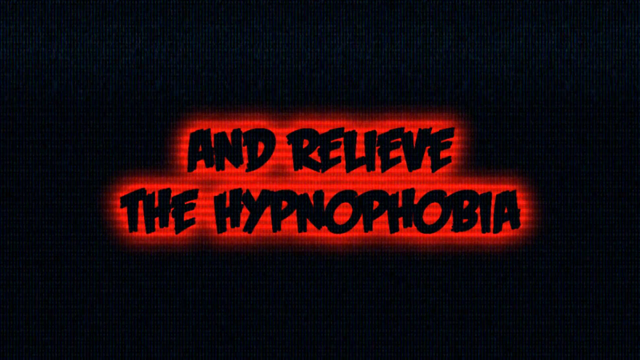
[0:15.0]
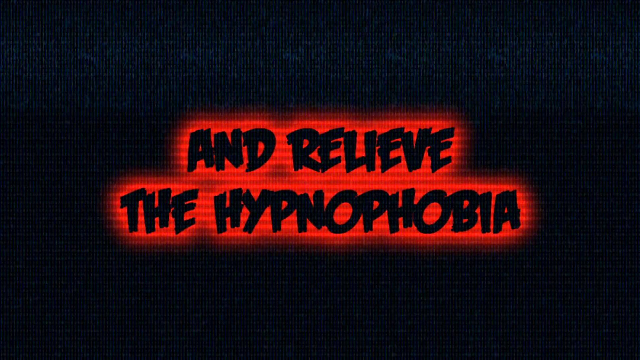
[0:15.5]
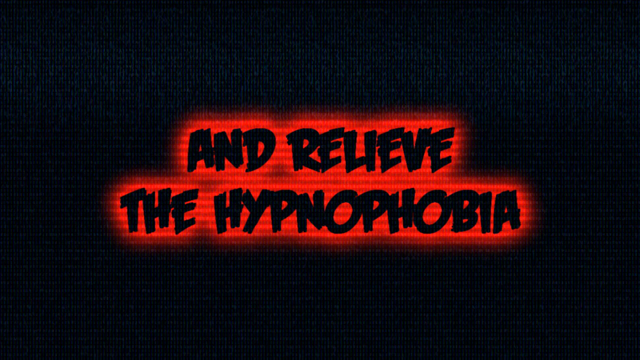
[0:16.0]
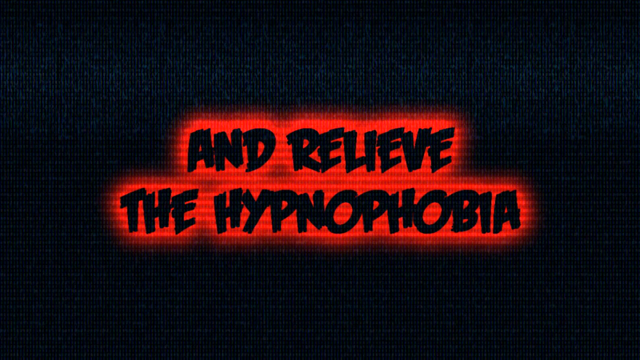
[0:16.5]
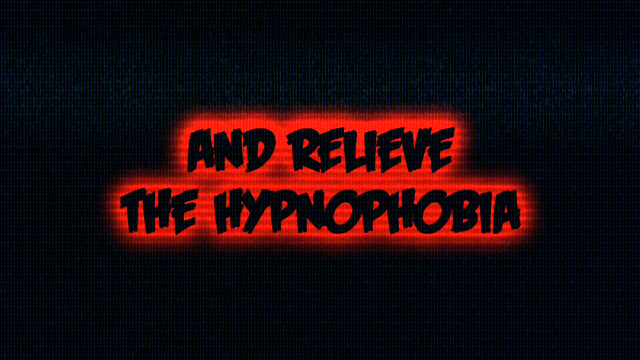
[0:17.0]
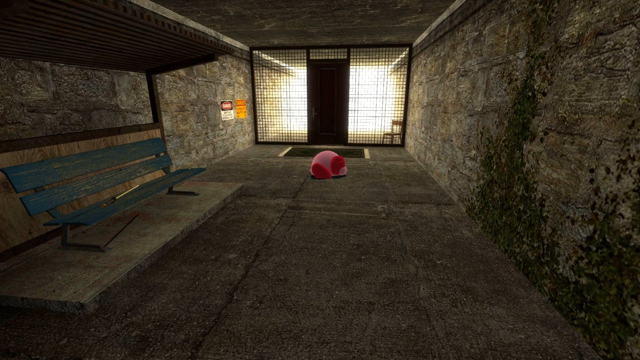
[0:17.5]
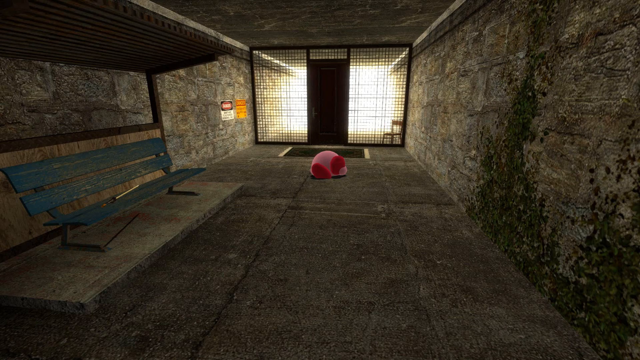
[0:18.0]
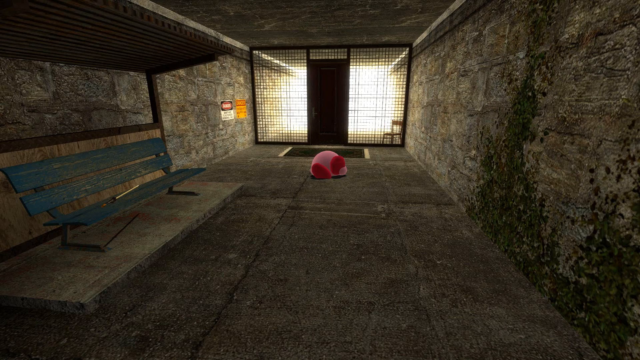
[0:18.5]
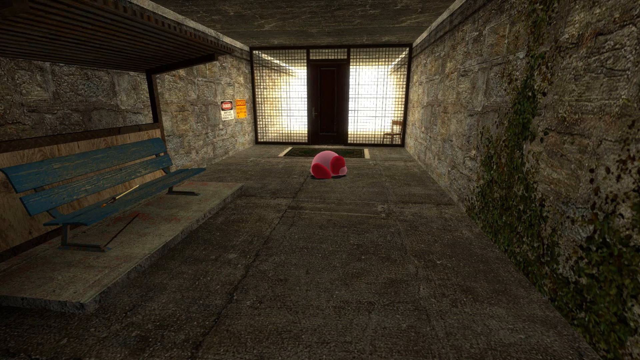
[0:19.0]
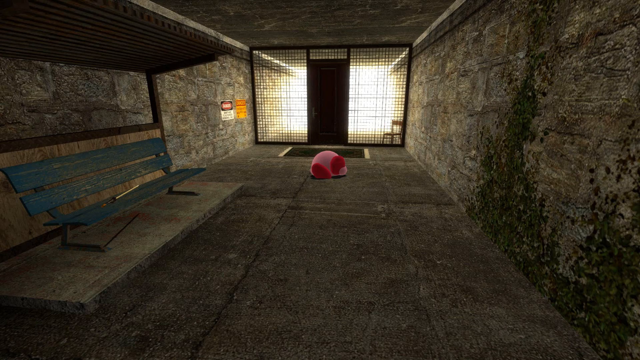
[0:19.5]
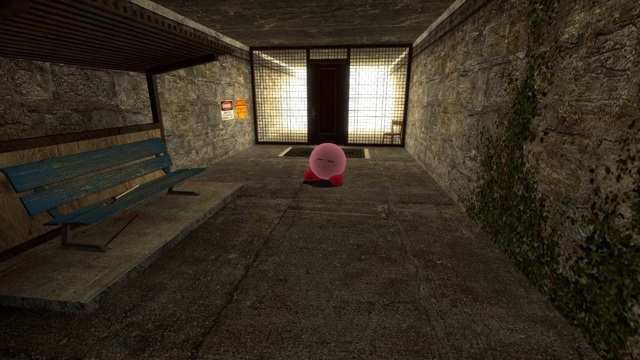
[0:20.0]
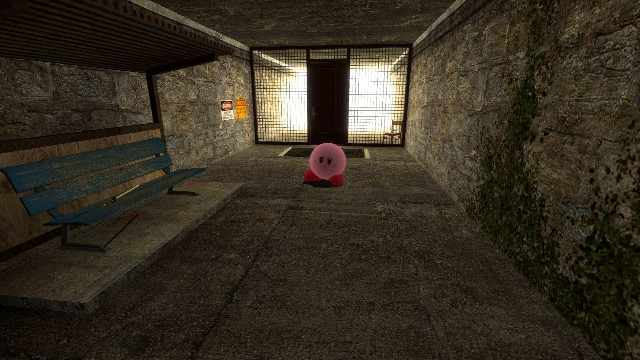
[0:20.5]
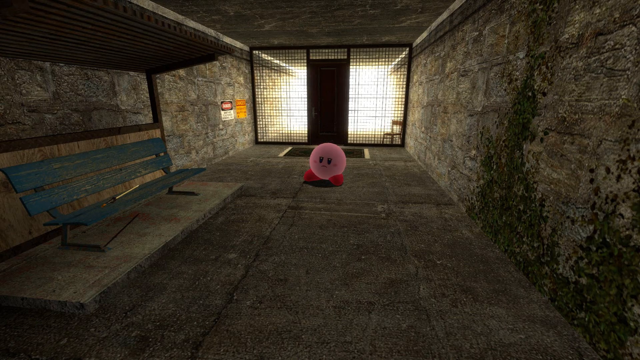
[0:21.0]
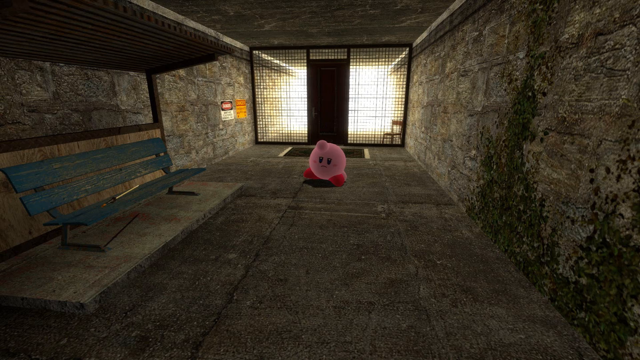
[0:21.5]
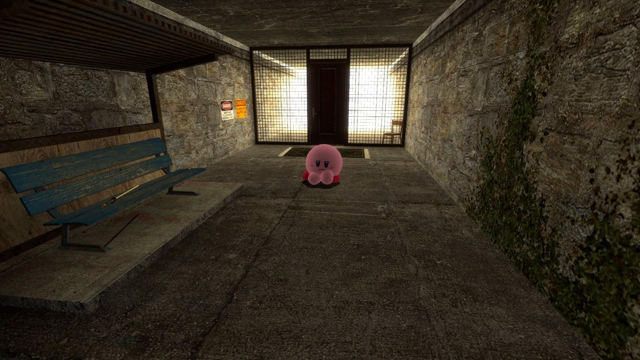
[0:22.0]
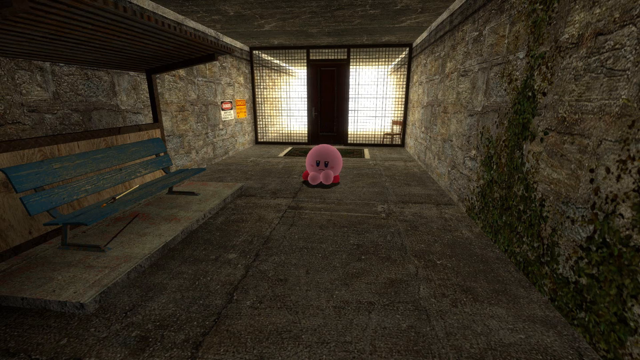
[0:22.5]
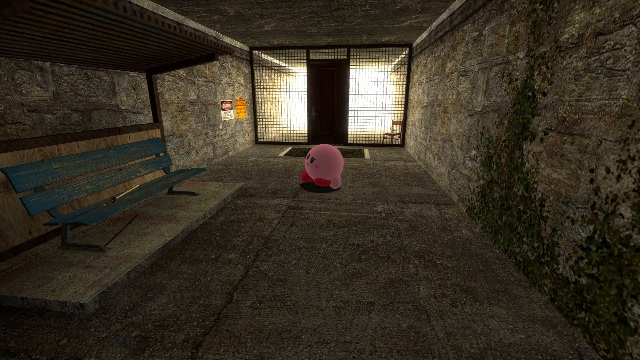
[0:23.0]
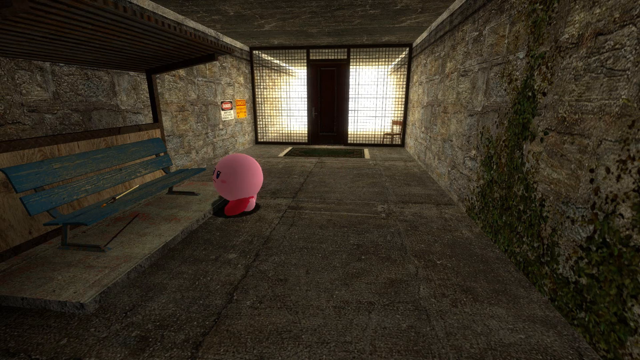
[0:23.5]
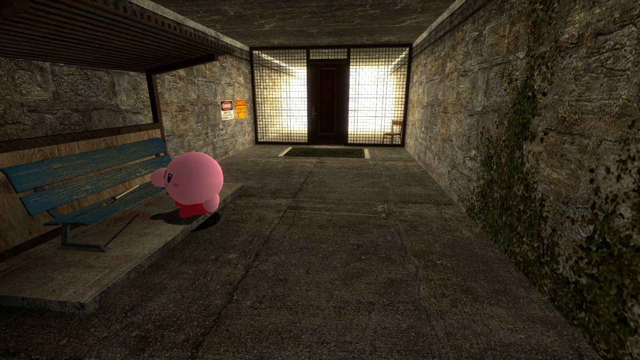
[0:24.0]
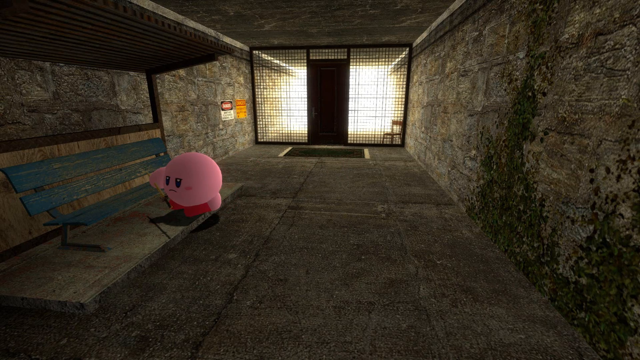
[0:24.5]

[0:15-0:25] The title reads "relieving the hypnophobia". The scene is a dark, stone-looking room, and the text "and relief, the hypnophobia" appears. In the room is a pink character with a circle body, circle feet, circle arms and a little purple dot on its head. It has black eyes, a mouth and rosy cheeks. There is a blue wood-looking bench, like one in a park, and the character jumps up to the bench. Outside light comes into the room. It is almost like a jail room, with a closed door and very wire-like bars. A couple of signs are on the wall. The words "and relief the hypnophobia" flash intermittently.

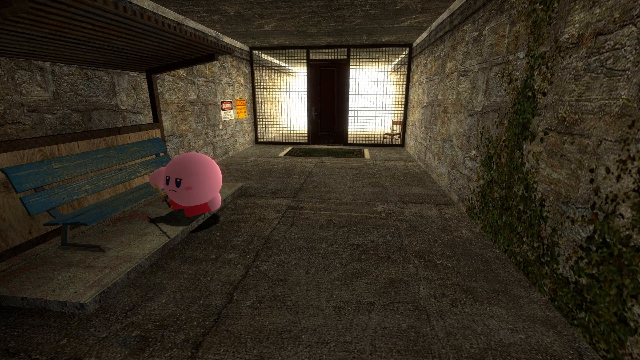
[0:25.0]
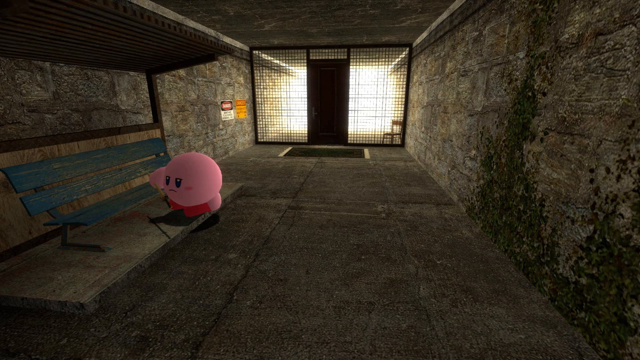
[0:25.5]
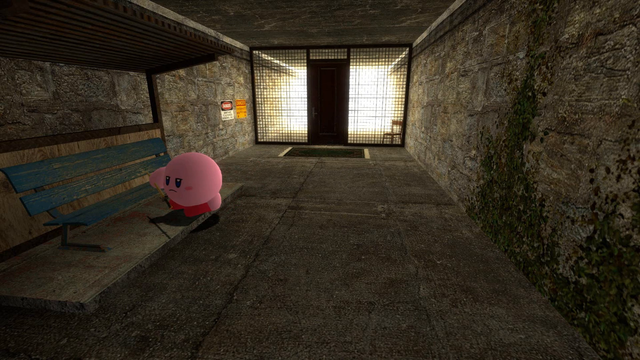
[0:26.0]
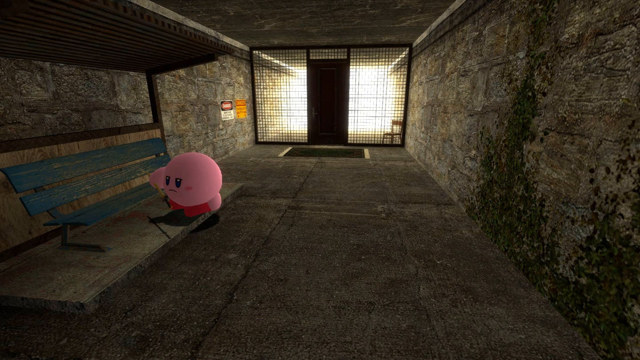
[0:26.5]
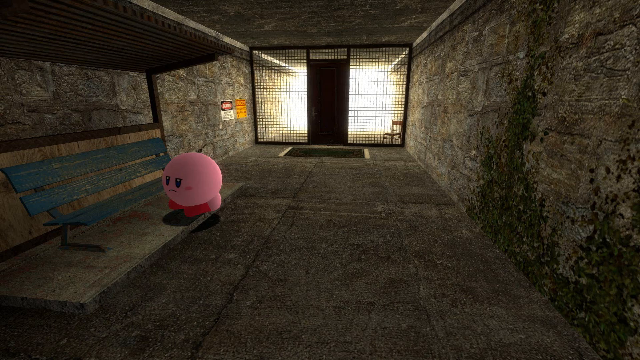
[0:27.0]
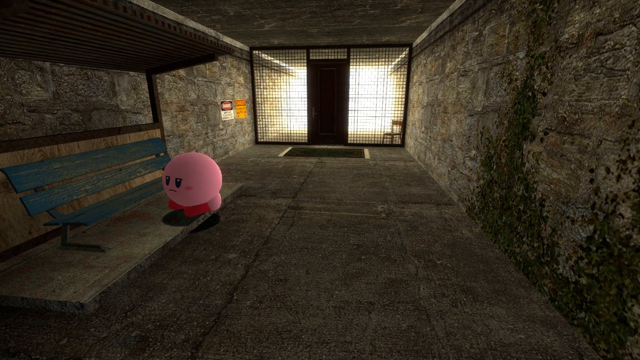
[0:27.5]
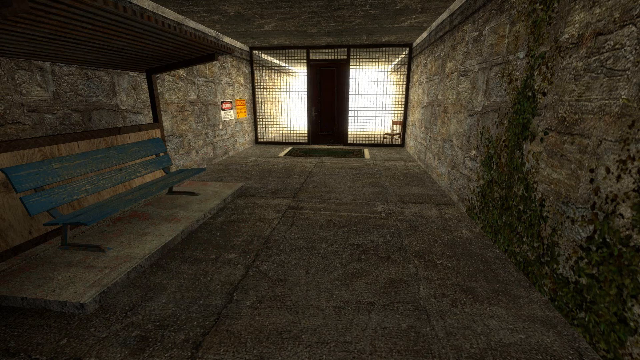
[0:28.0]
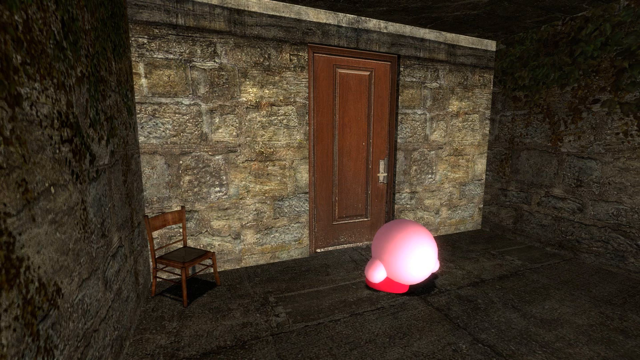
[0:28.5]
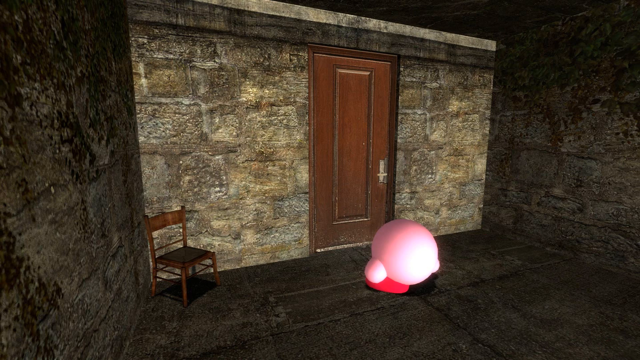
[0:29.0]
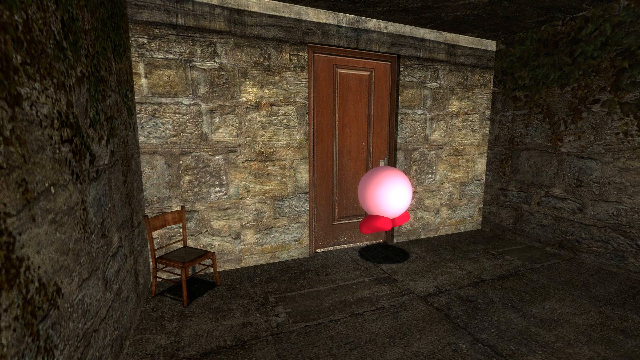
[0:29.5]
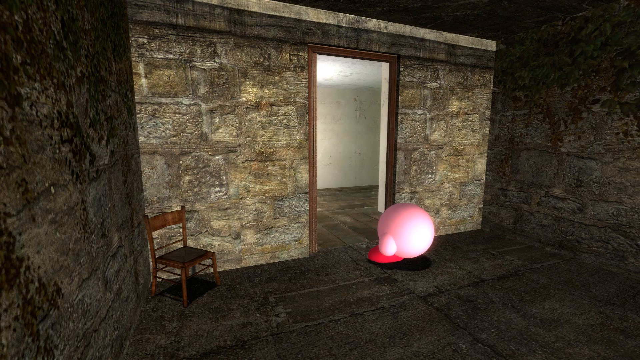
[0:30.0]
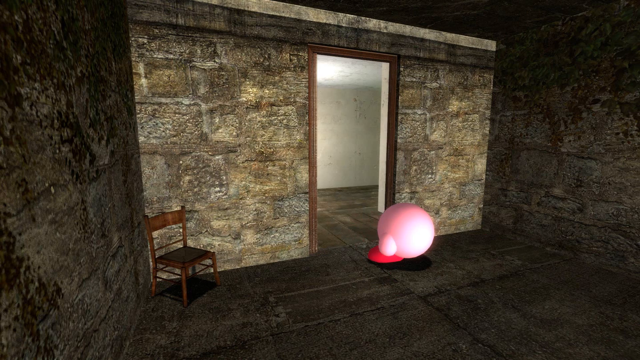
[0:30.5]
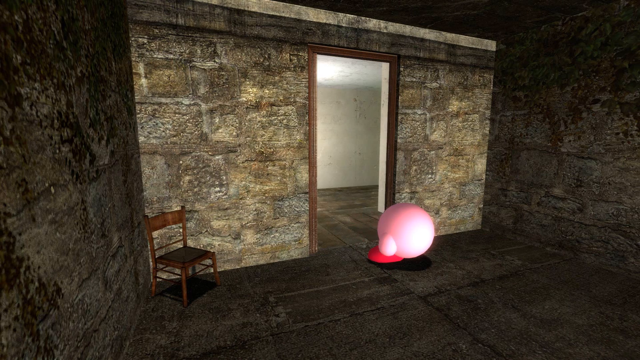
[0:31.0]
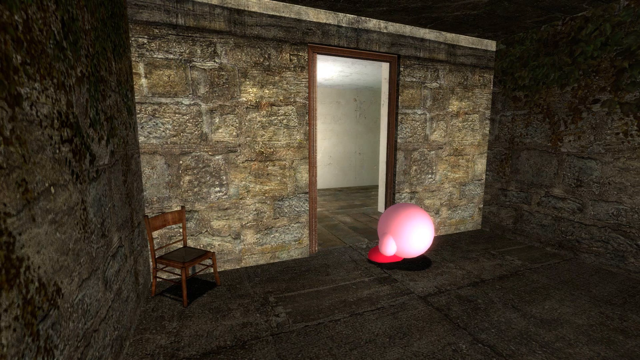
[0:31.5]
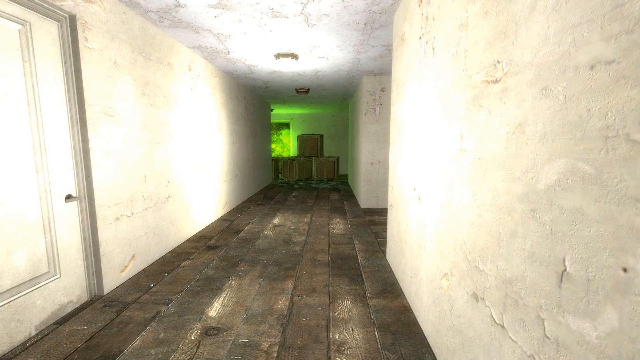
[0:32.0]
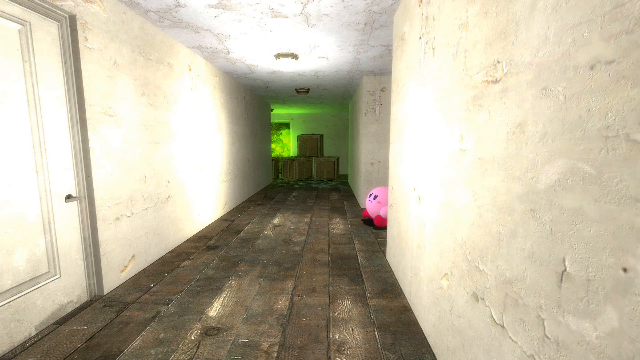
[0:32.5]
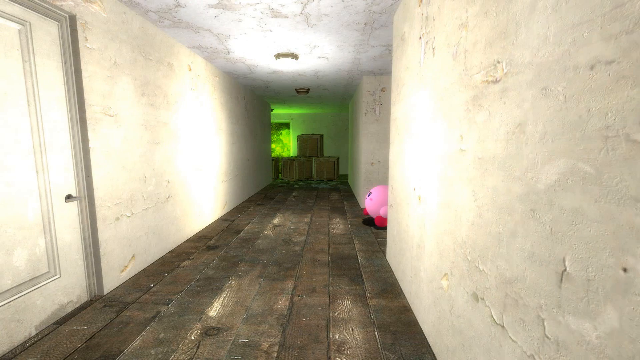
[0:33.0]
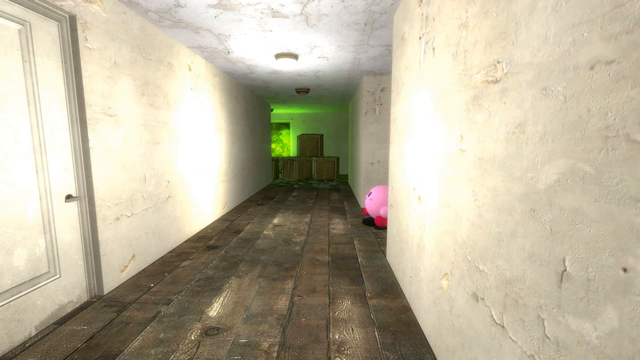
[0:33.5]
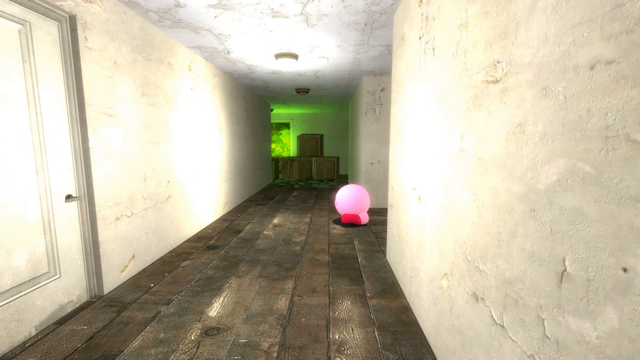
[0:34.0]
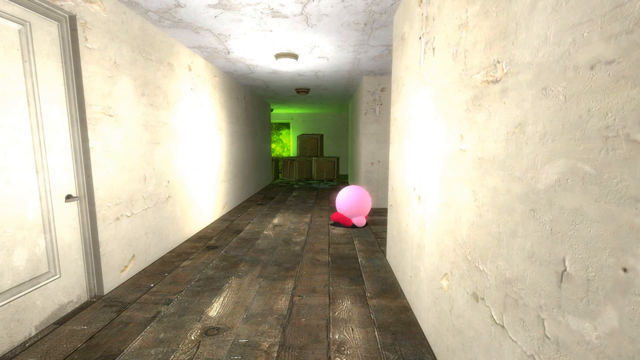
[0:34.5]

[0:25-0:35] In the same room, the pink character pushes open a door with its feet. It is not the door the light comes from and looks like it may be a back wall door. A chair is in the corner of the room next to this back door. The walls look stone. The character enters a hallway in the same building, with concrete pavers on the floor and yellow, hard-looking walls. Past the door, the walls look like they have paint chipping off, and there is light from lighting in the hallway. Cardboard boxes are at the end of the hallway. There is wood trim or doors with door handles. The pink character has red parts that look like feet.